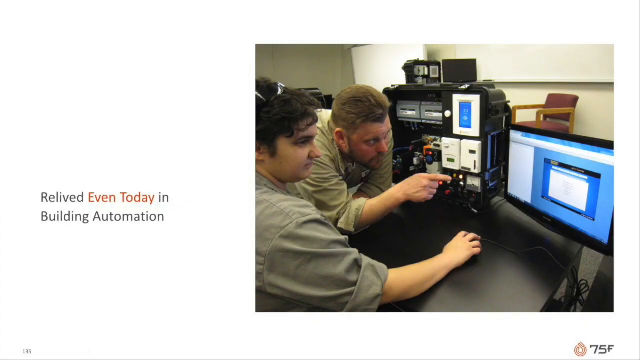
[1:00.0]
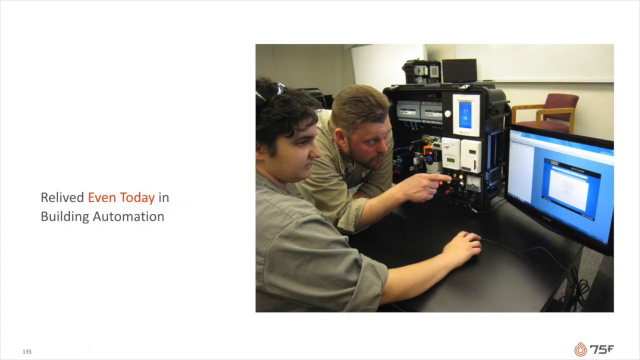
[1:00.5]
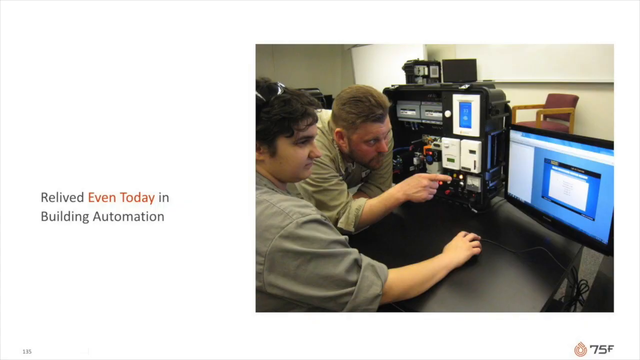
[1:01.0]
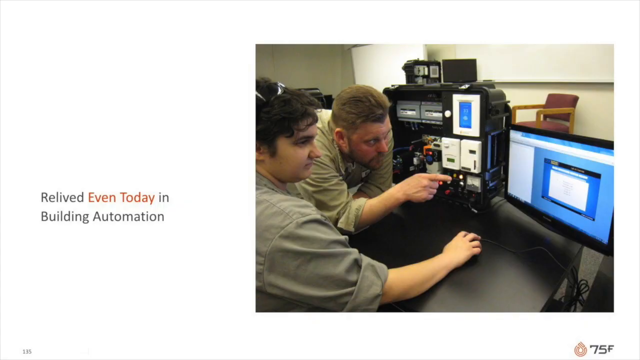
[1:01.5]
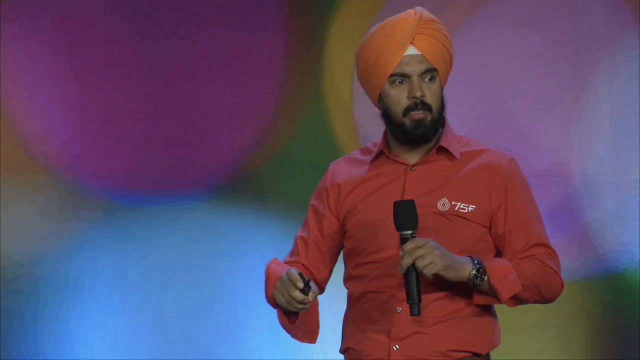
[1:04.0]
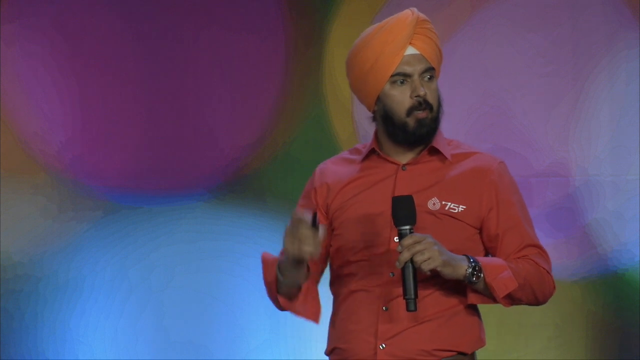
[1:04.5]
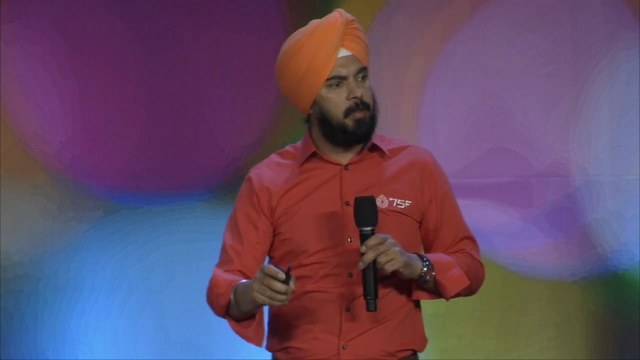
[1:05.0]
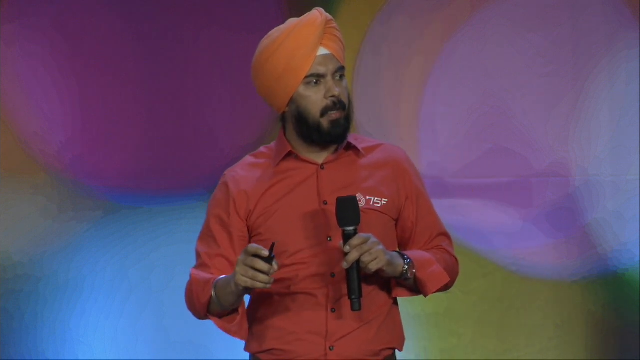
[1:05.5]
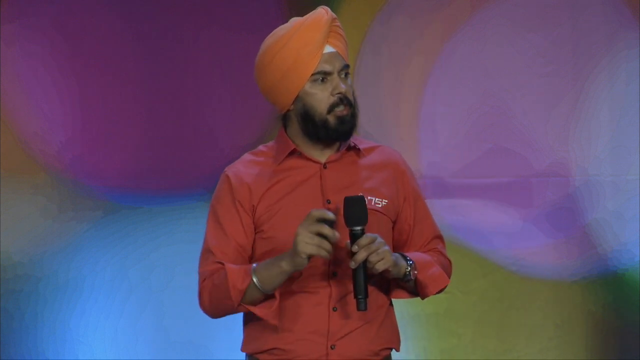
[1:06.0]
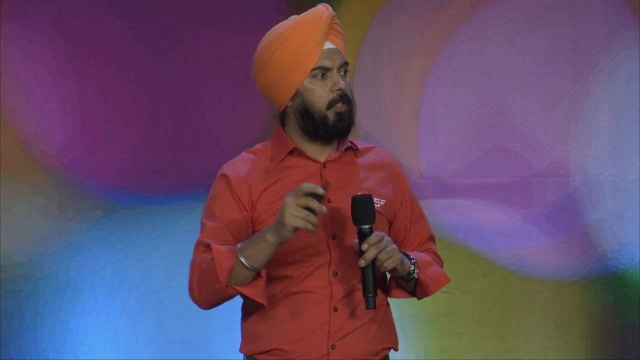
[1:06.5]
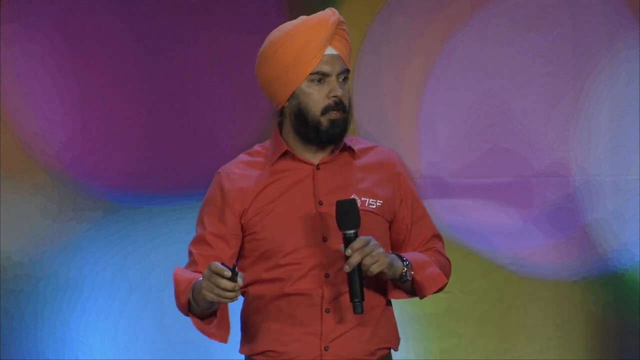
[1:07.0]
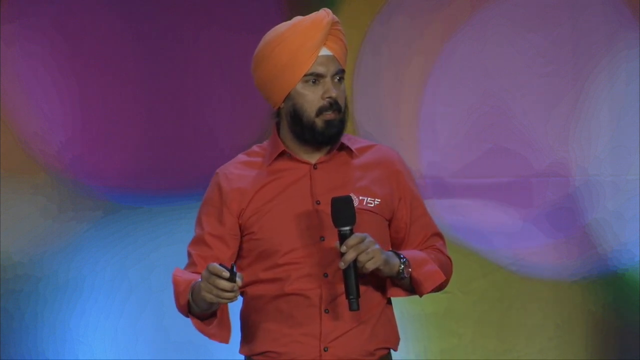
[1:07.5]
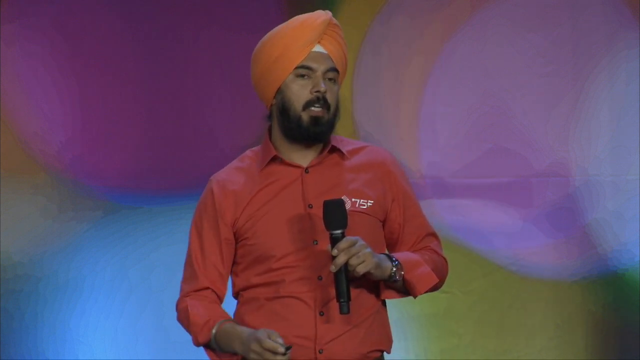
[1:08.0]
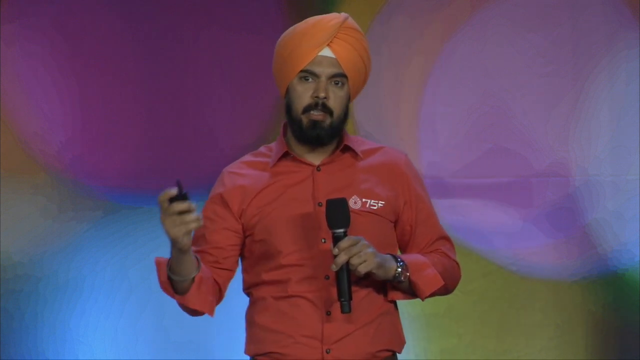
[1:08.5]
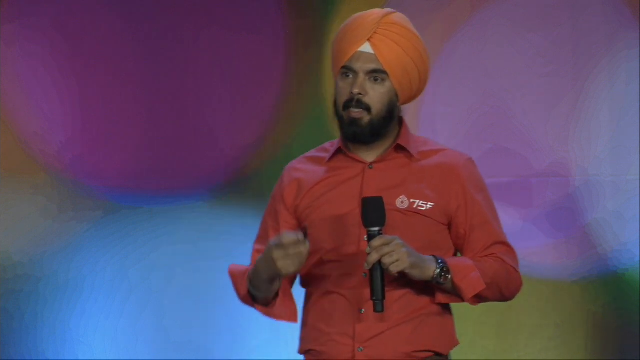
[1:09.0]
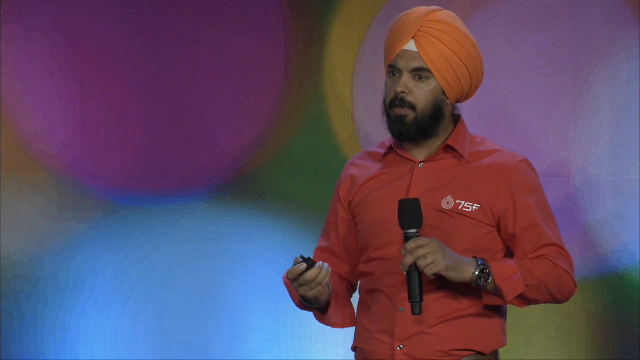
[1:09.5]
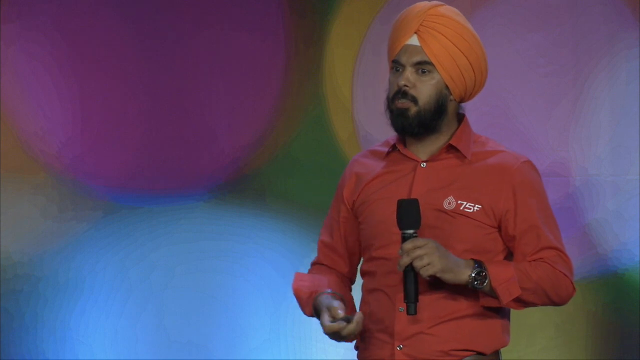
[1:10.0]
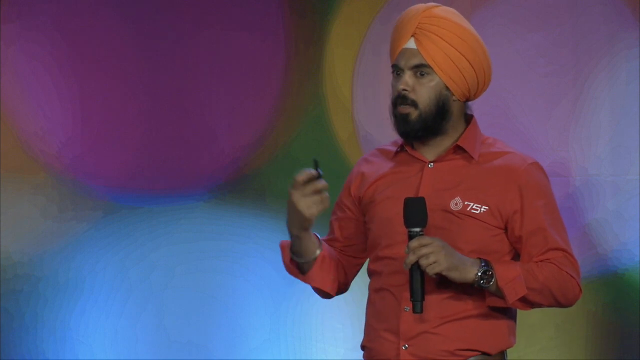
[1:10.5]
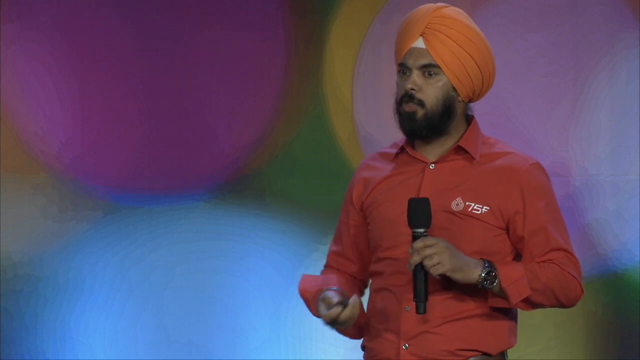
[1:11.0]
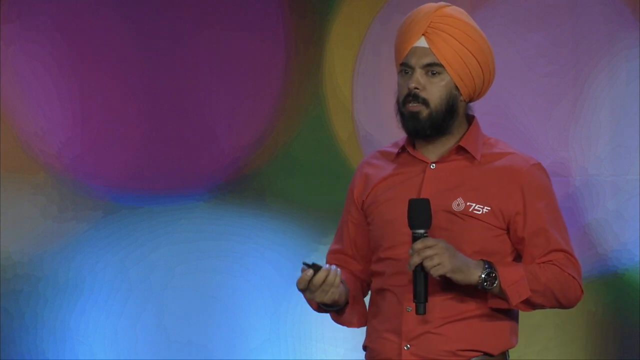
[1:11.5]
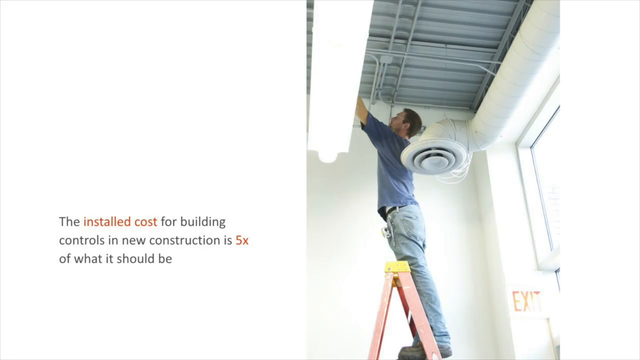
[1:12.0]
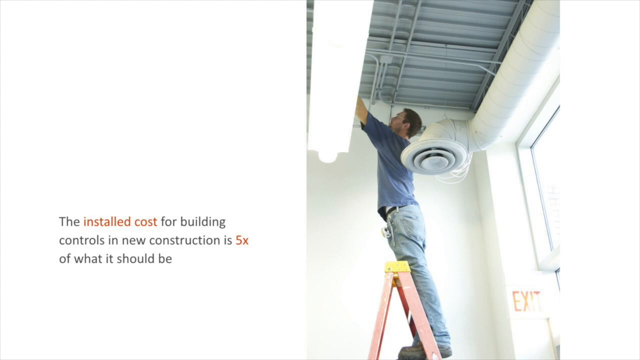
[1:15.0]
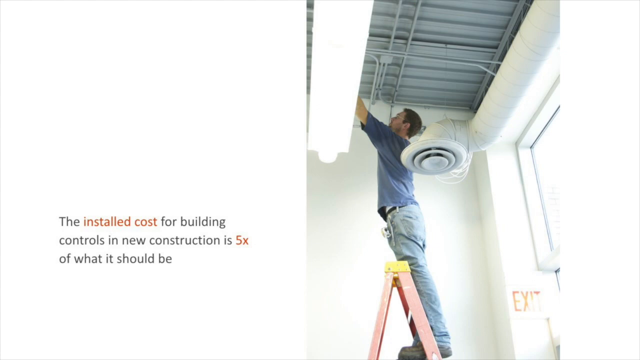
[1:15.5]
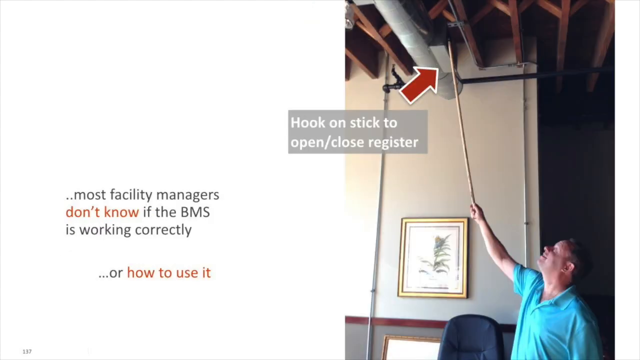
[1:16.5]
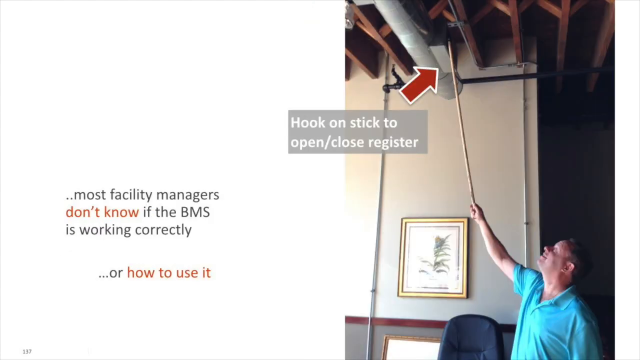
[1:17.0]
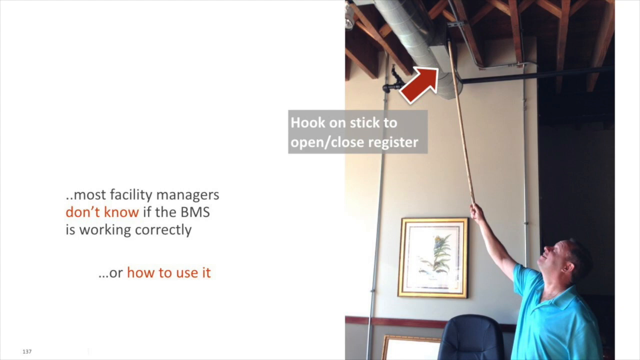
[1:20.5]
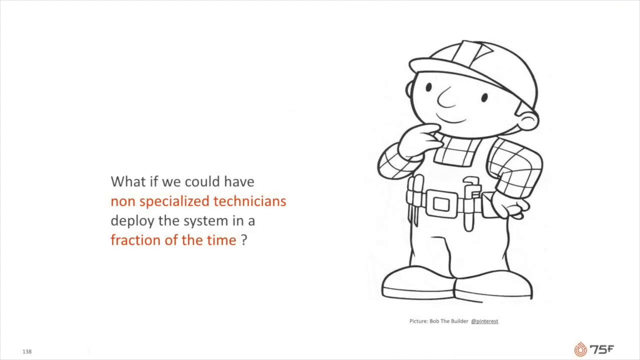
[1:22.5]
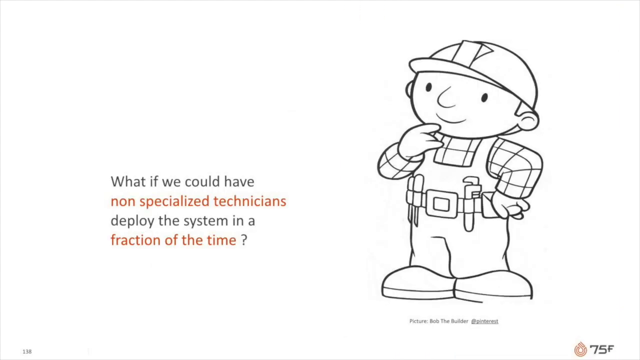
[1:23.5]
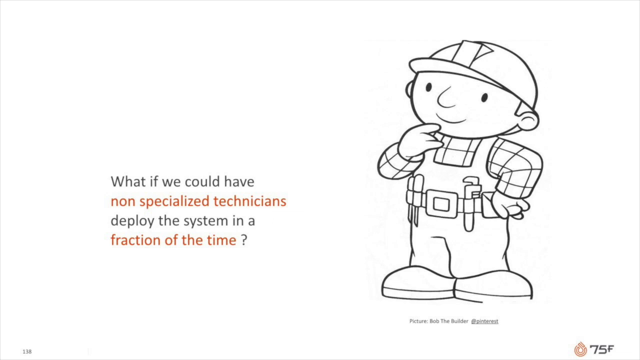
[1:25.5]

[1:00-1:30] On the screen is an image of two people looking at a computer monitor; one has his hand on the mouse and the other points at the screen. To the left of the monitor is an array of electronic items arranged in a rack or box. Text next to the photograph reads "relived even today in building automation". The screen switches to the speaker, a South Asian man with a beard, a red shirt and an orange turban, holding a microphone in his left hand and a slide clicker. He speaks to the audience while moving his right arm left and right and gesturing with it. The image switches to a man on a stepladder fitting out lighting in a building, with text reading "the installed cost for building controls in new construction is five times what it should be". Next is a picture of a man reaching up toward a ceiling with a long stick, with an arrow pointing to where the stick touches the ceiling labelled "hook on stick to open close register"; text to the left of the picture reads "Most facility managers don't know if the BMS is working correctly or how to use it". The next slide shows the children's character Bob the Builder outlined in black and white with the text "What if we could have non-specialised technicians deploy the system in a fraction of the time?"